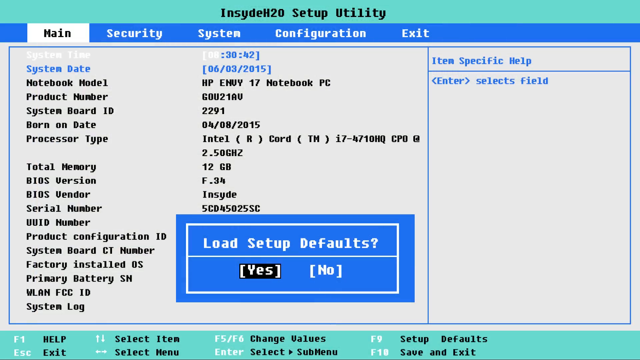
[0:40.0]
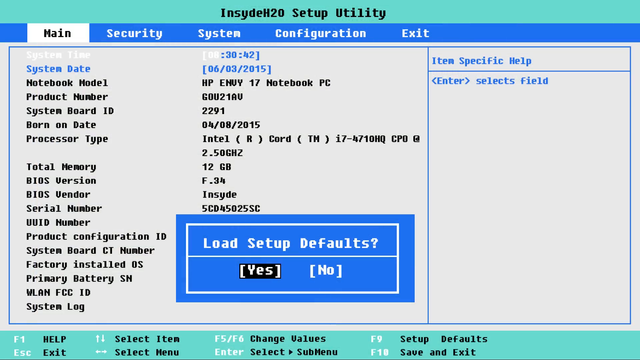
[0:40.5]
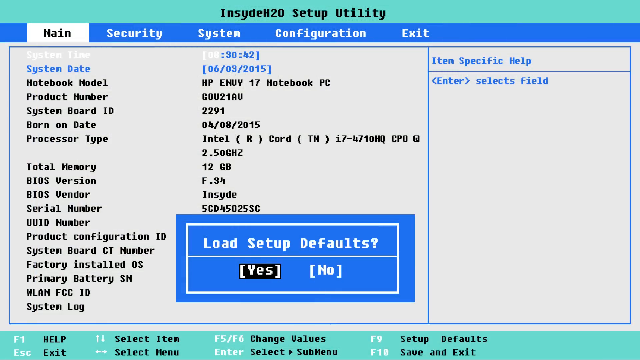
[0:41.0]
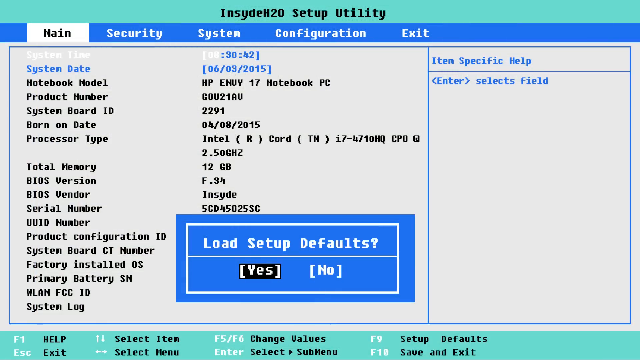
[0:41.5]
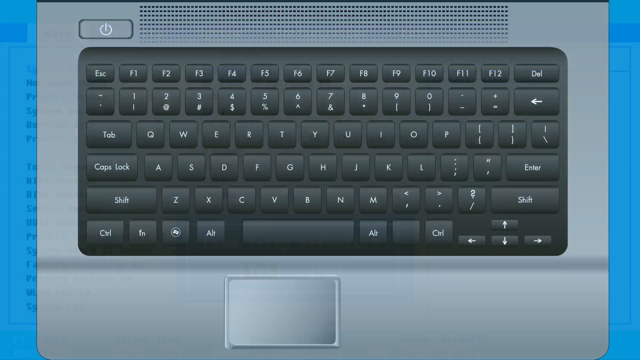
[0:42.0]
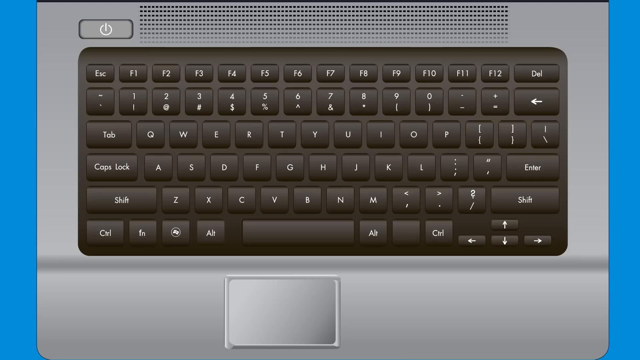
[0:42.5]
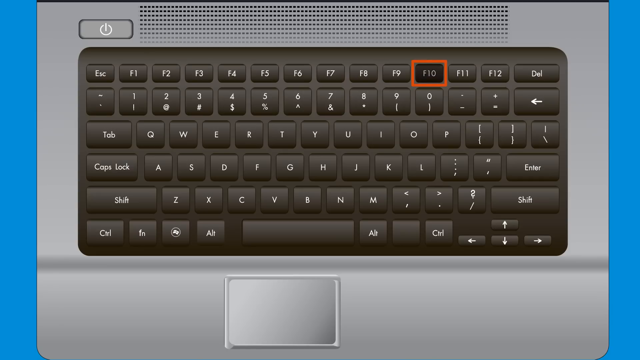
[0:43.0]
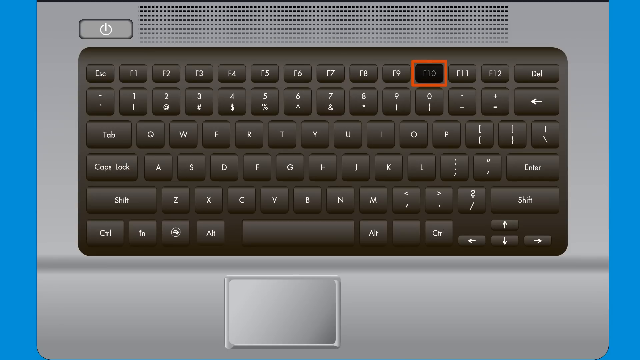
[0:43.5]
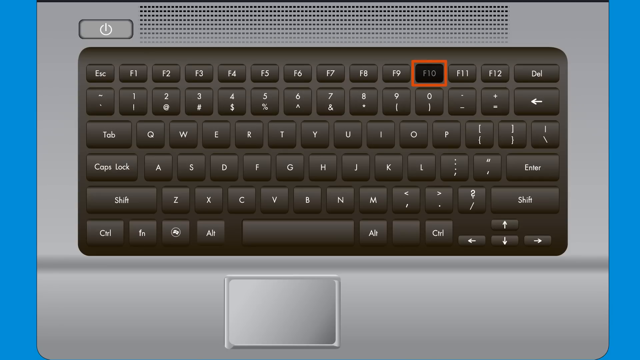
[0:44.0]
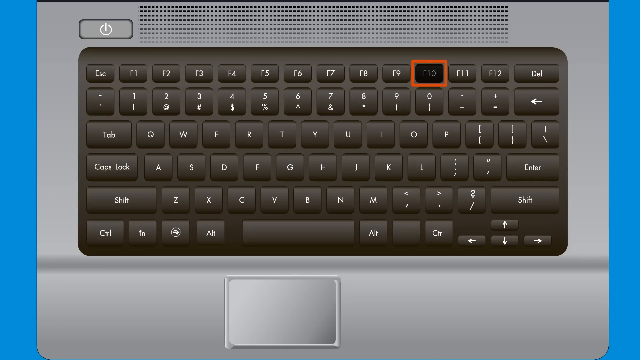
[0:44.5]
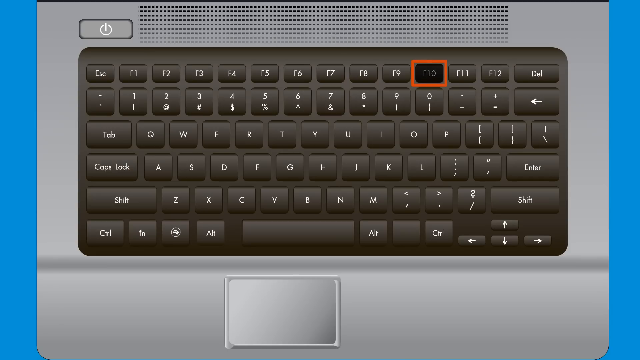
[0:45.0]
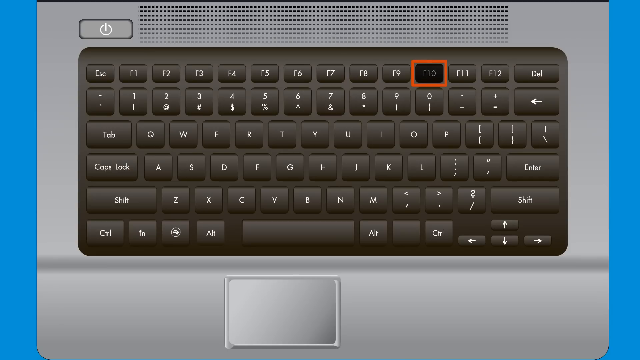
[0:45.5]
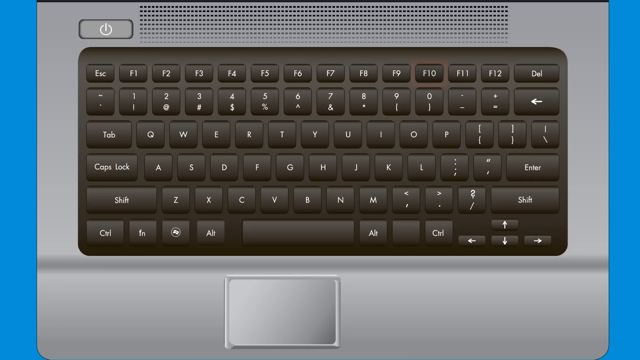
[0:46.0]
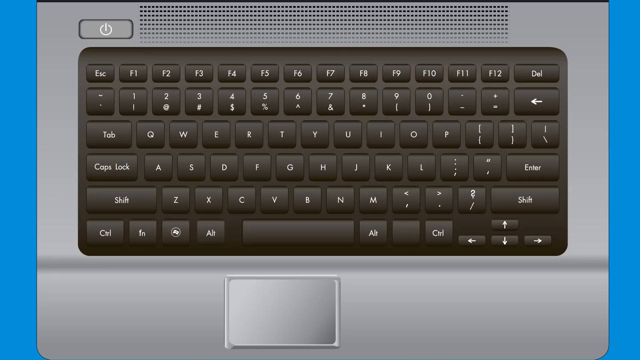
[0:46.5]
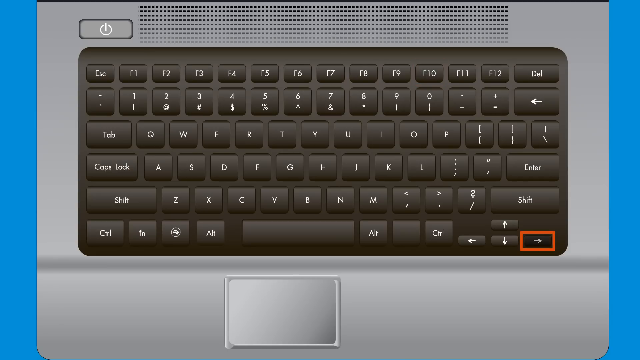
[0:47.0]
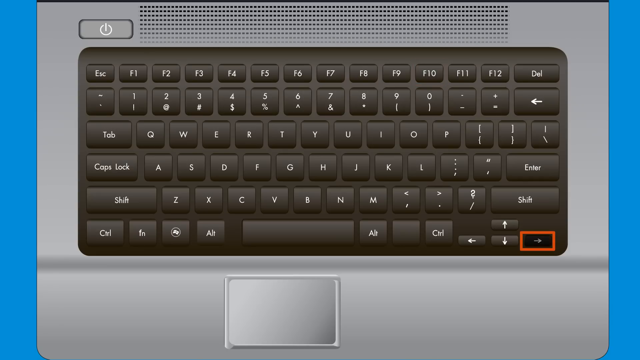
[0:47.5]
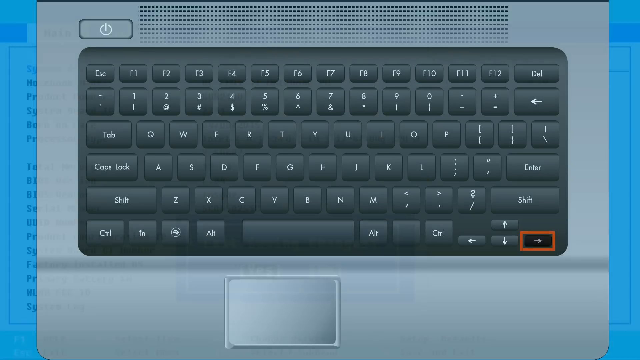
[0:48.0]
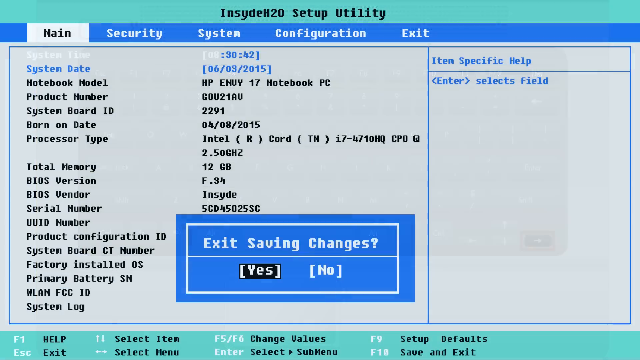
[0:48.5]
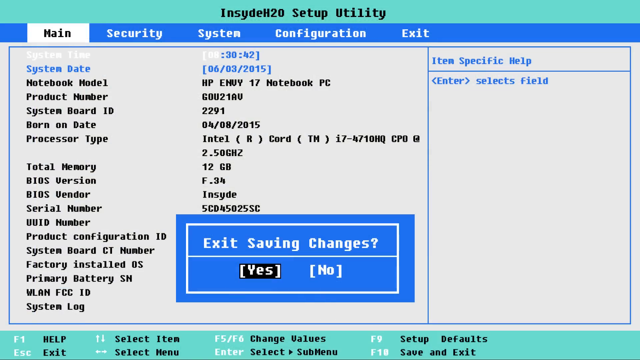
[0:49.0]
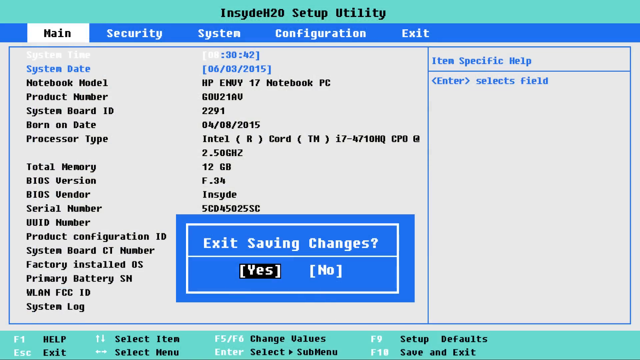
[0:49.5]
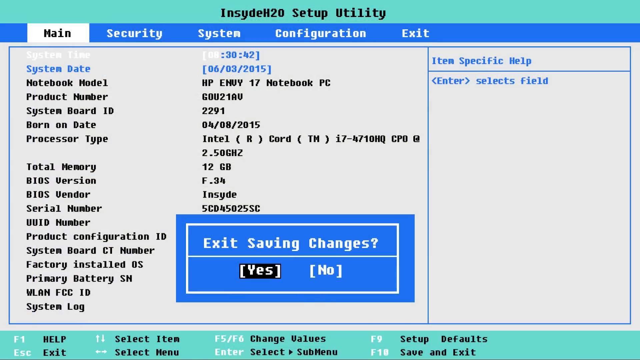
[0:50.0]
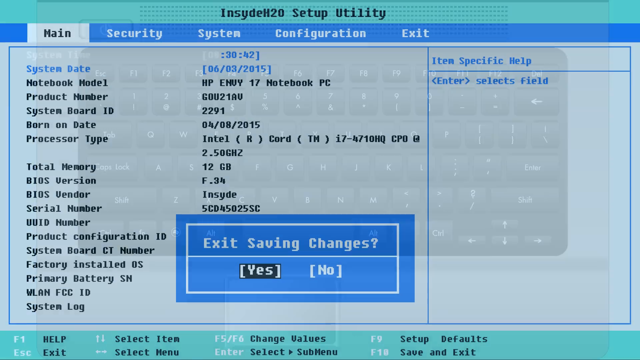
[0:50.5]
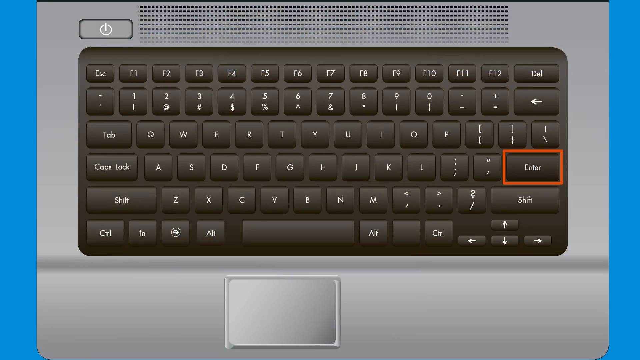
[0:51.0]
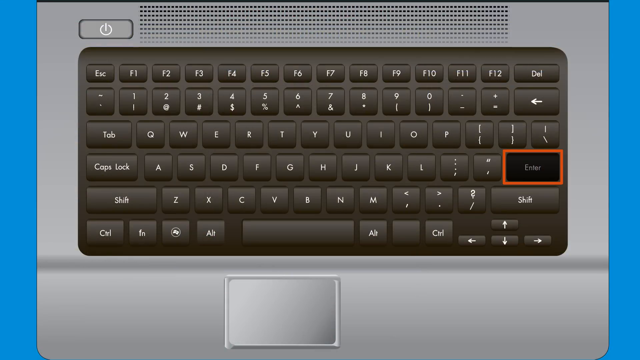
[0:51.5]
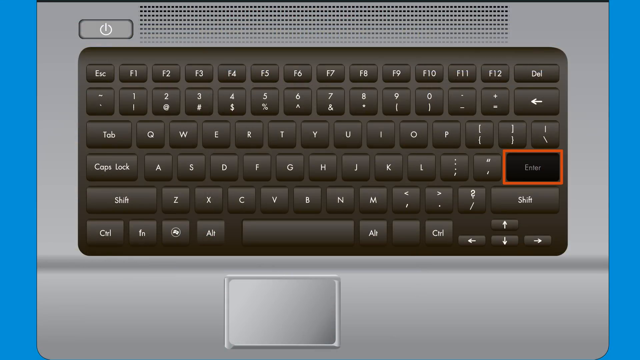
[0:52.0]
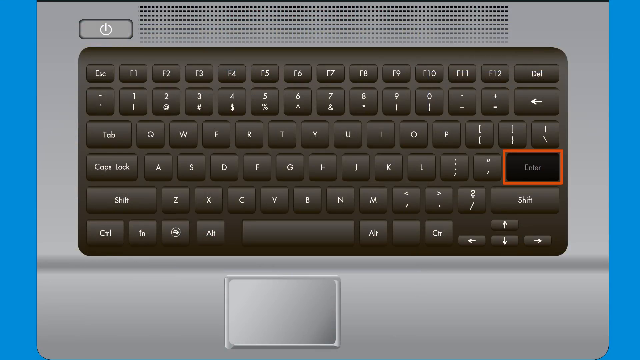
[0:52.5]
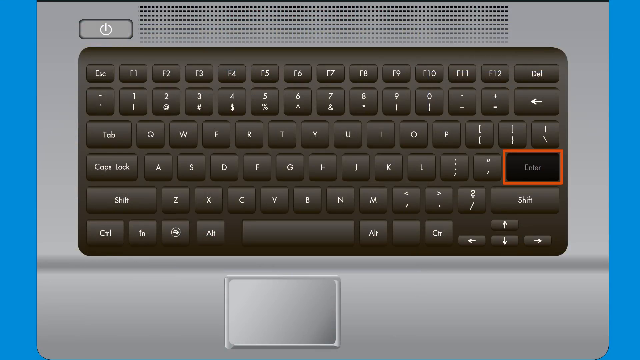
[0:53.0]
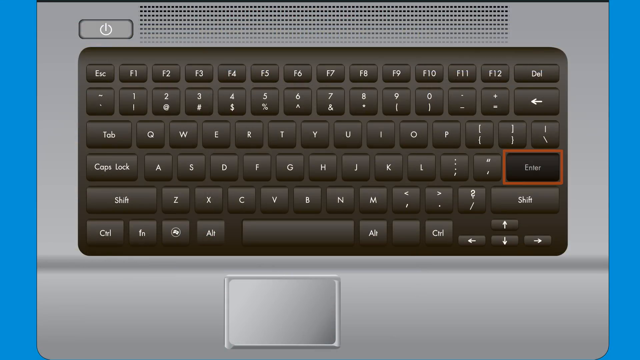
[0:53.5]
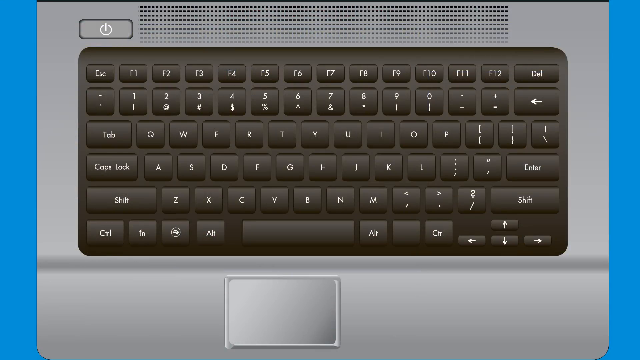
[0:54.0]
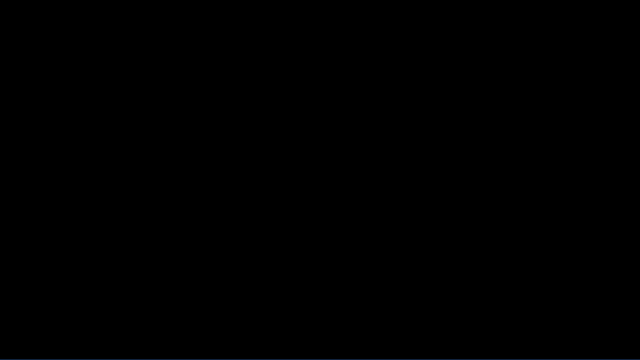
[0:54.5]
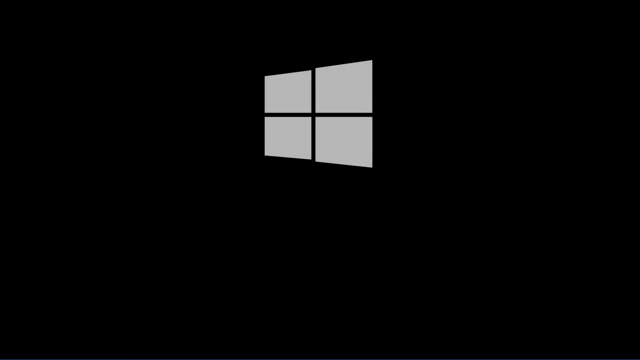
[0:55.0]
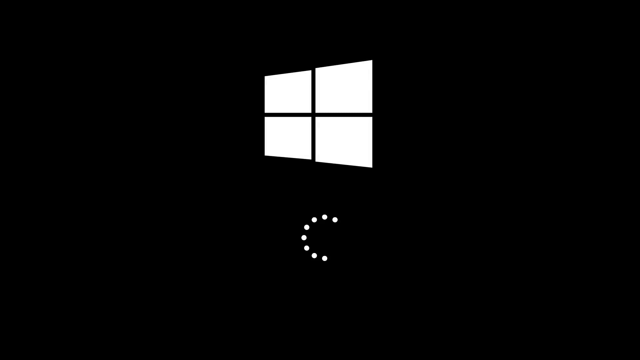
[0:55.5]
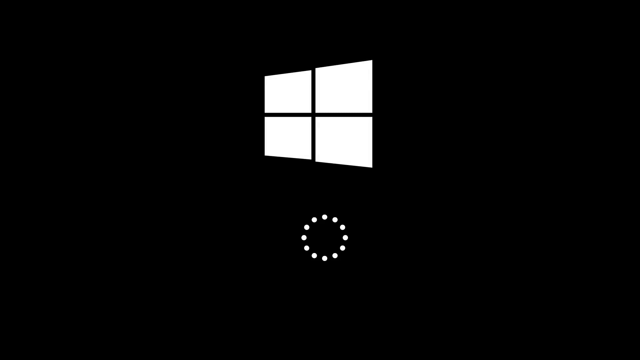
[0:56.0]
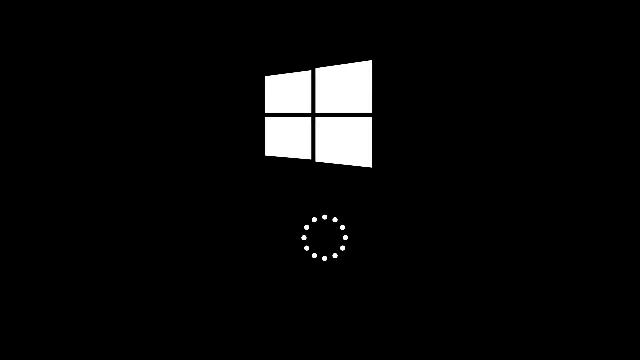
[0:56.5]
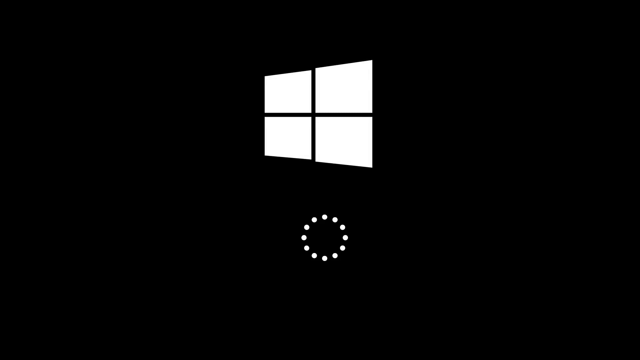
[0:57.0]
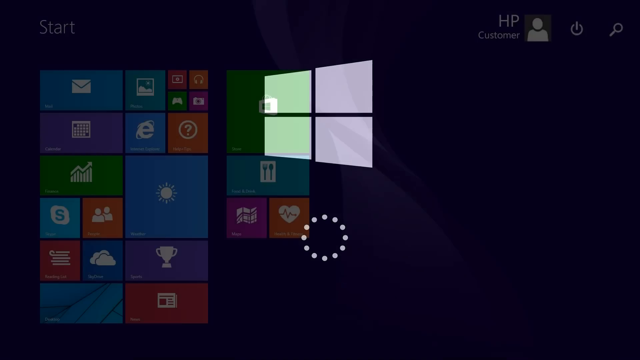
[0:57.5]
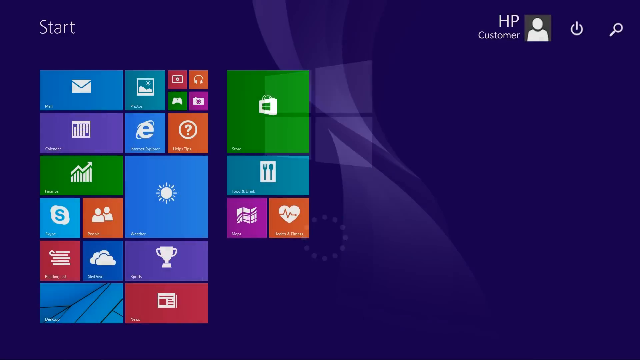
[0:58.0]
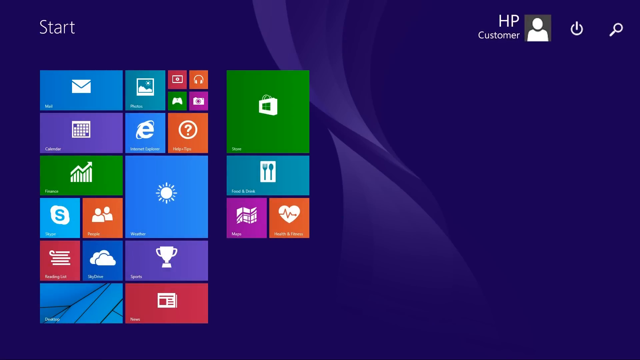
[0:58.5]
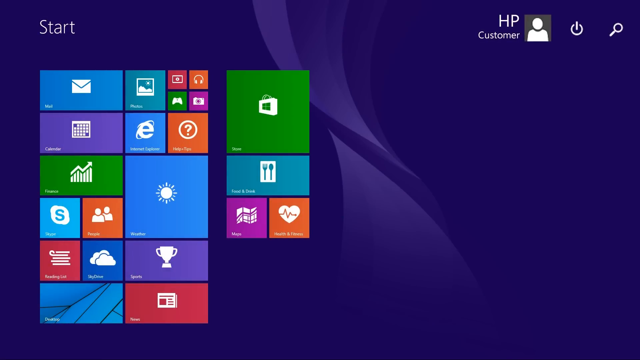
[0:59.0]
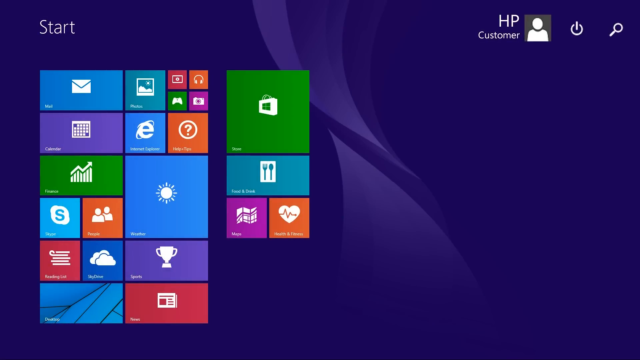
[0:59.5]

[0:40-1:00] In the setup utility, a load setup defaults window has popped up with yes or no. The video goes back to the picture of the laptop keyboard, where F10 is surrounded by an orange box, and then the right arrow key is highlighted with an orange box. The setup utility appears briefly with little change, and then the keyboard is shown again, this time with the enter key highlighted in an orange box. Next, a Windows logo appears with a ring at the bottom, indicating a loading screen. The Windows desktop seen earlier returns, and then the video briefly moves away from the desktop to a white screen with three lines: the first says "find more videos like this at", the second says "hp.com/support videos", a link to the HP website, and the third says "youtube.com/howto4u", a link to the YouTube channel.